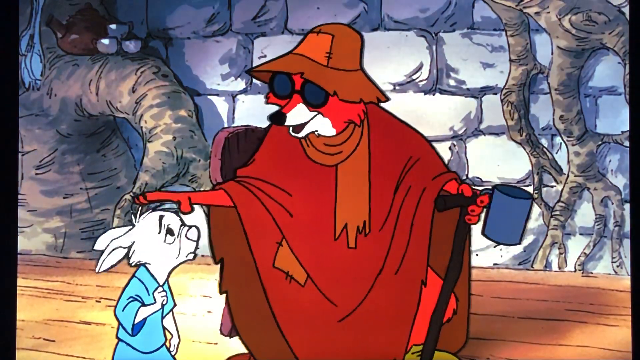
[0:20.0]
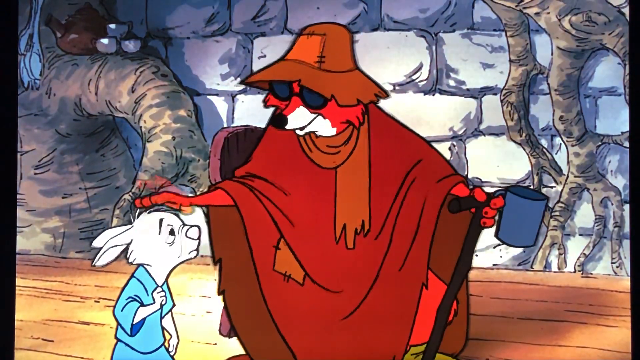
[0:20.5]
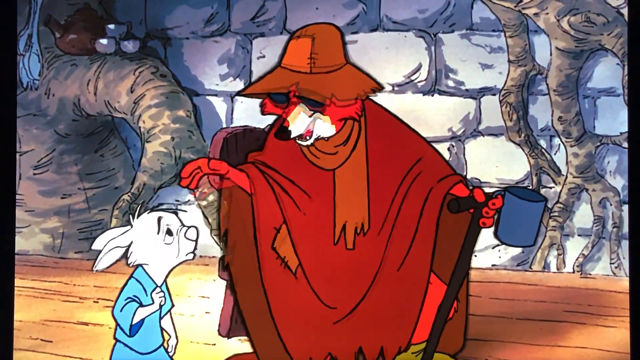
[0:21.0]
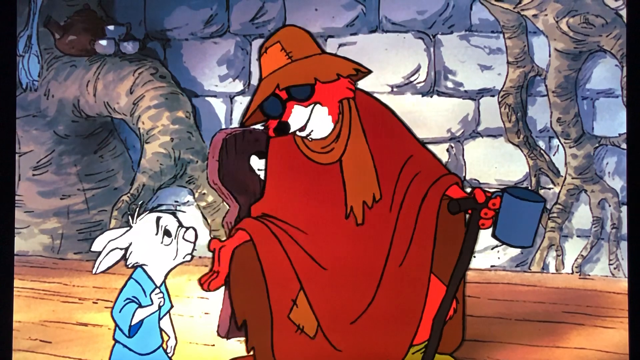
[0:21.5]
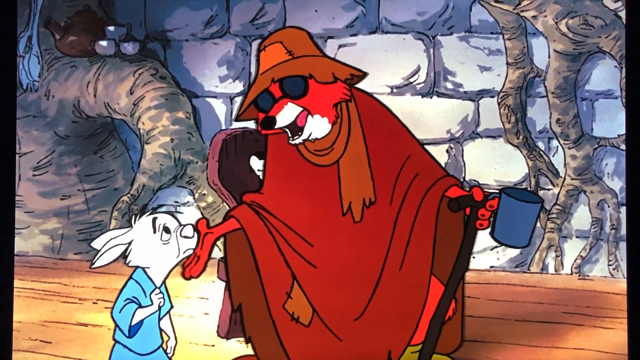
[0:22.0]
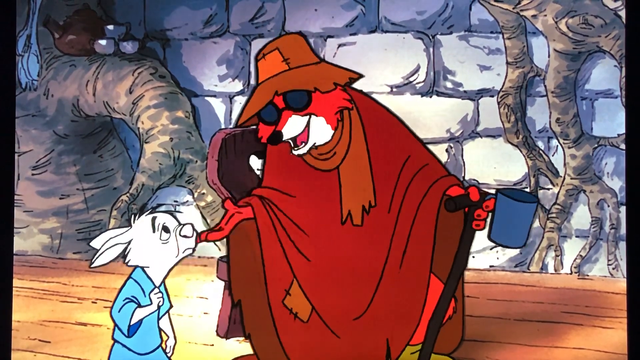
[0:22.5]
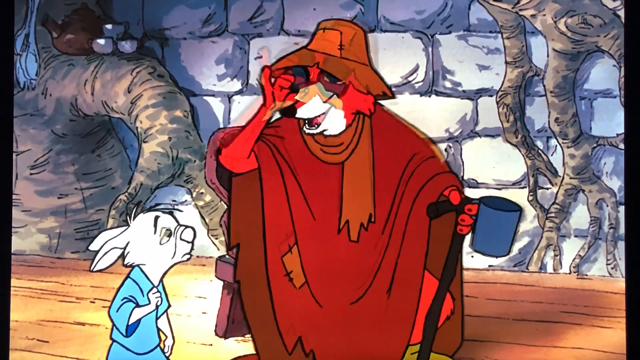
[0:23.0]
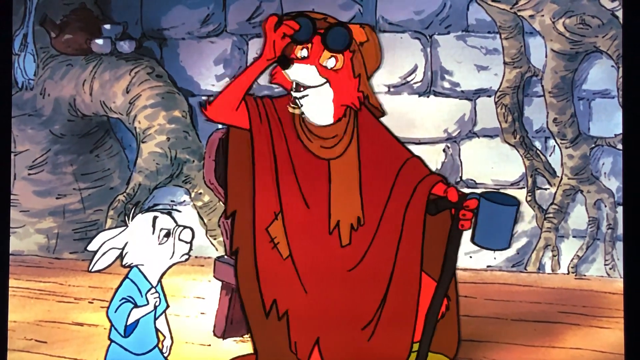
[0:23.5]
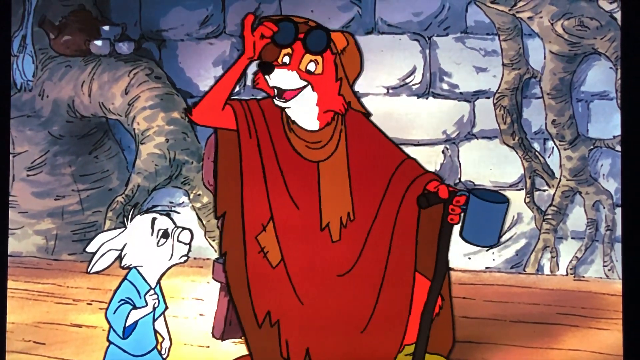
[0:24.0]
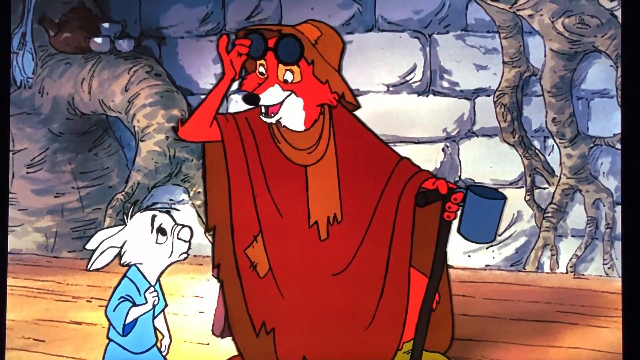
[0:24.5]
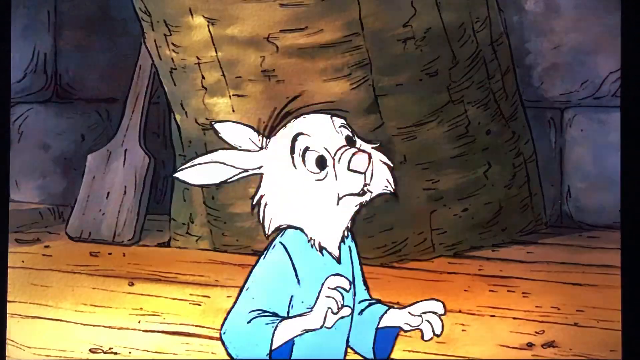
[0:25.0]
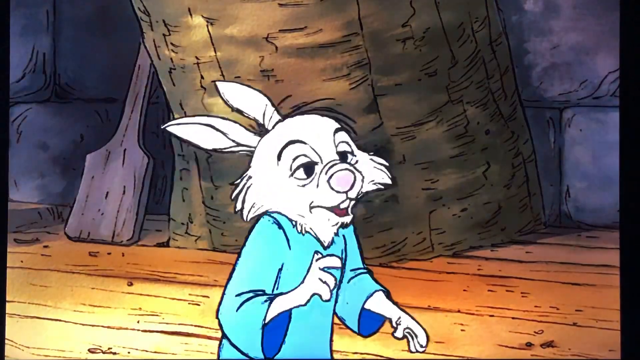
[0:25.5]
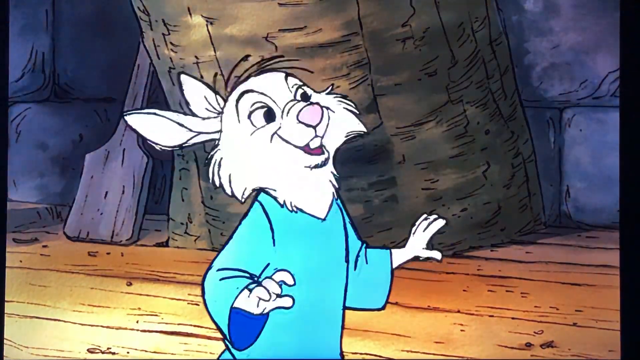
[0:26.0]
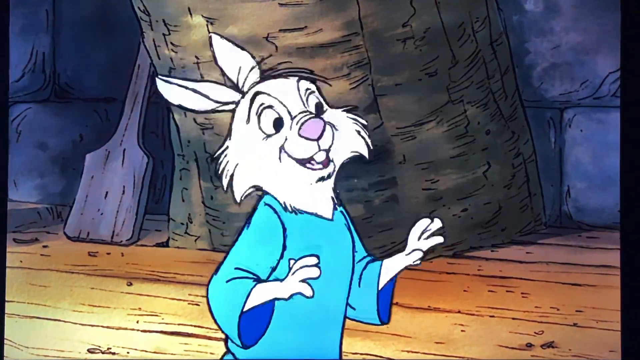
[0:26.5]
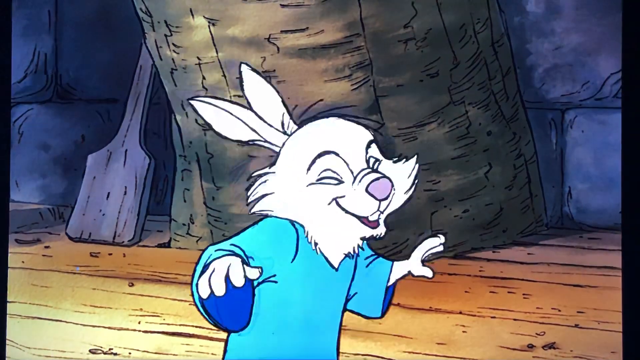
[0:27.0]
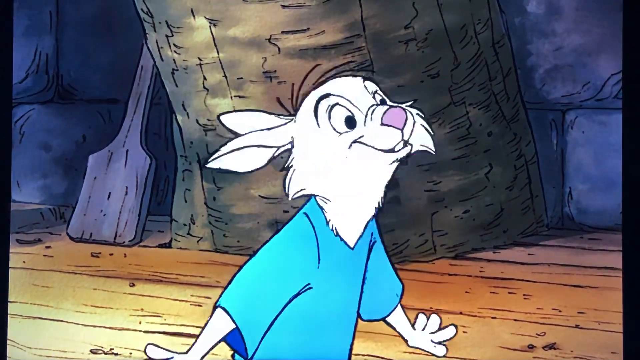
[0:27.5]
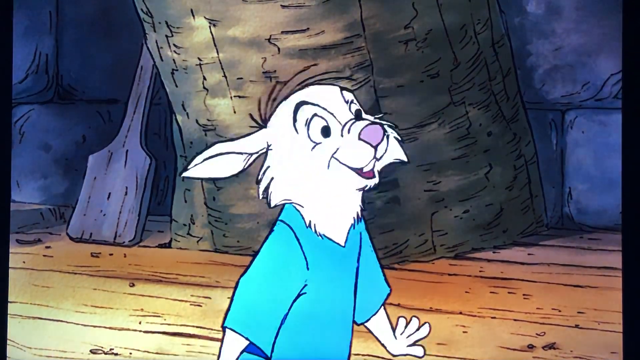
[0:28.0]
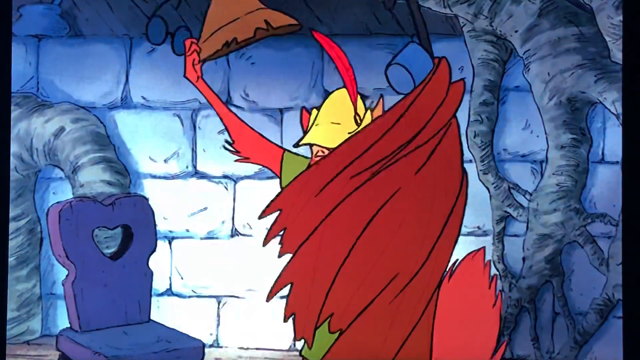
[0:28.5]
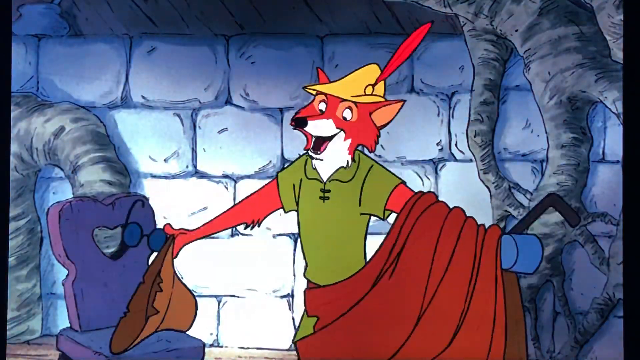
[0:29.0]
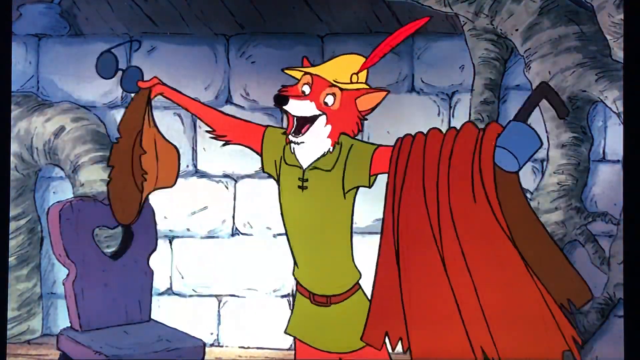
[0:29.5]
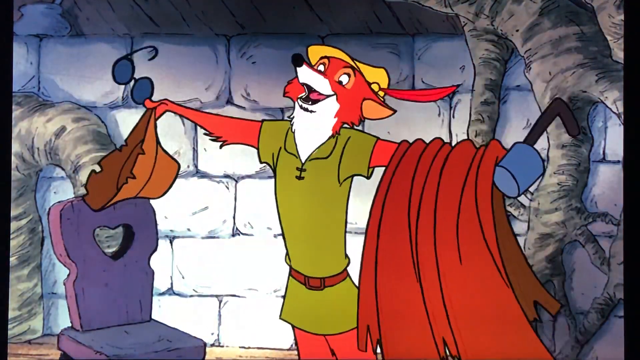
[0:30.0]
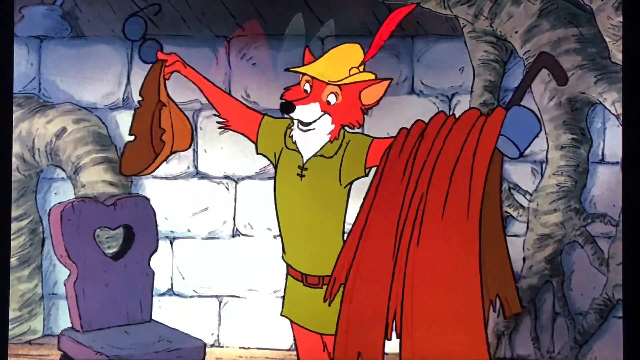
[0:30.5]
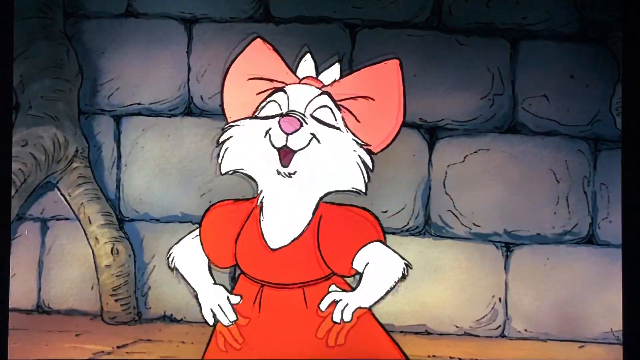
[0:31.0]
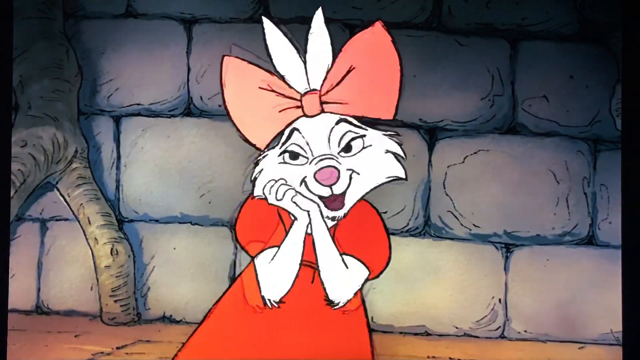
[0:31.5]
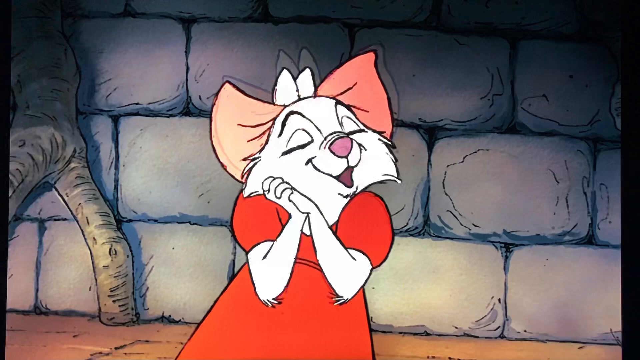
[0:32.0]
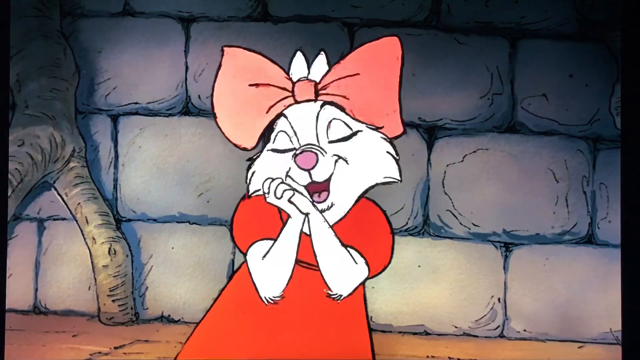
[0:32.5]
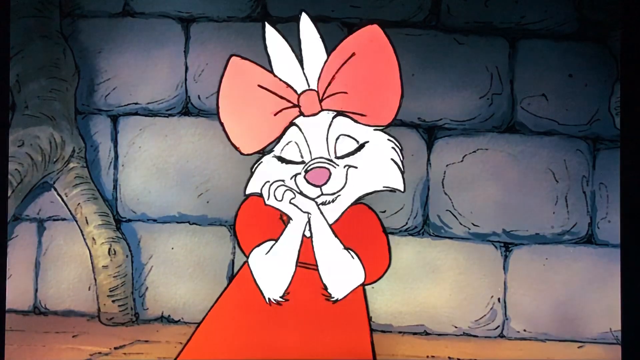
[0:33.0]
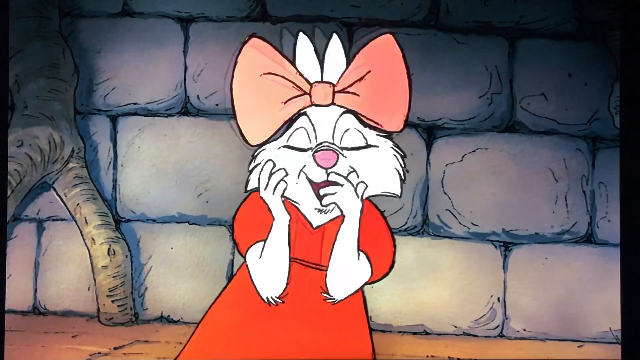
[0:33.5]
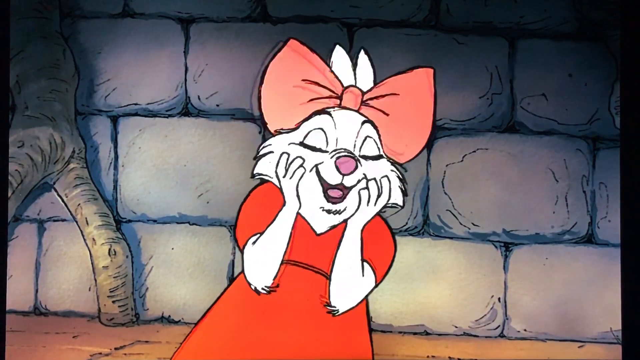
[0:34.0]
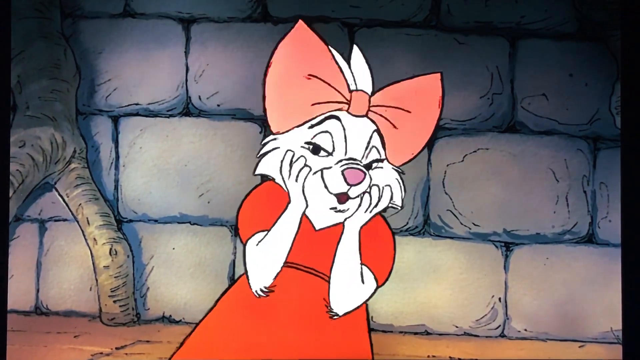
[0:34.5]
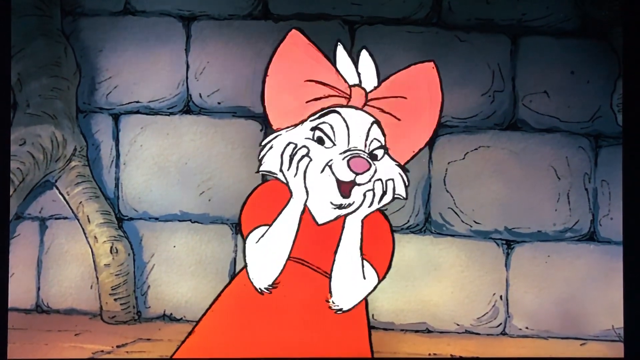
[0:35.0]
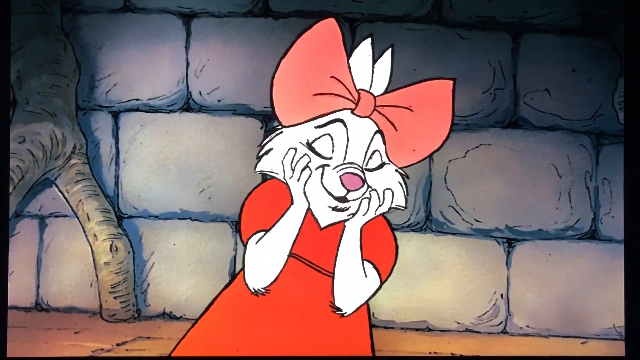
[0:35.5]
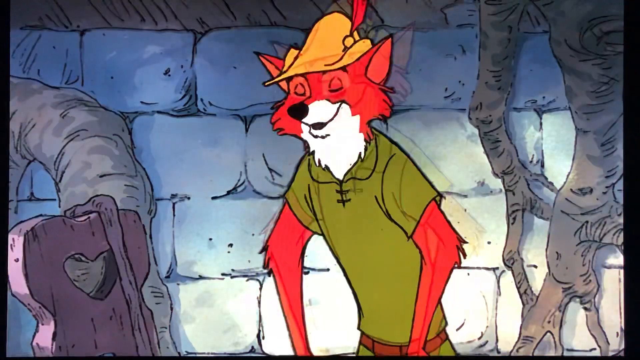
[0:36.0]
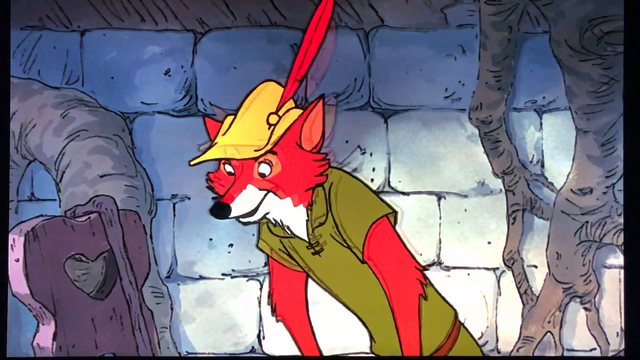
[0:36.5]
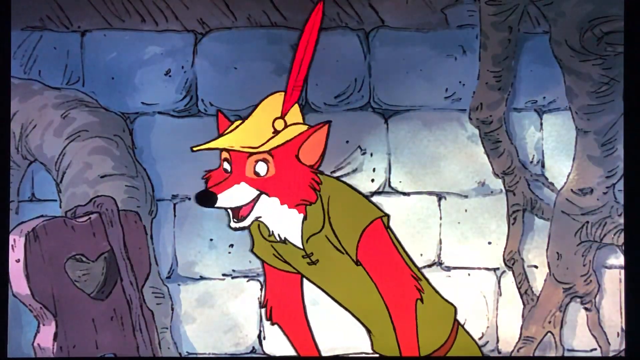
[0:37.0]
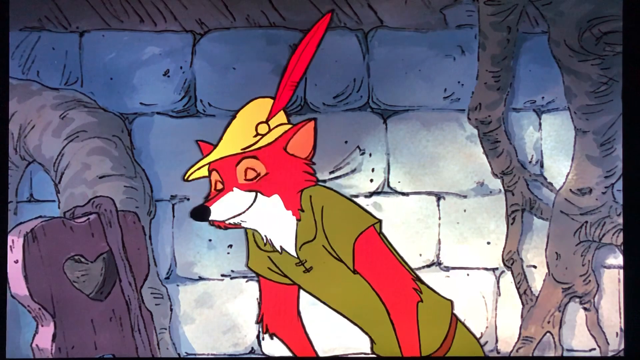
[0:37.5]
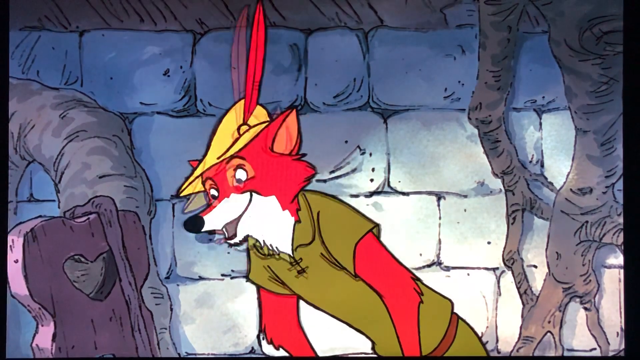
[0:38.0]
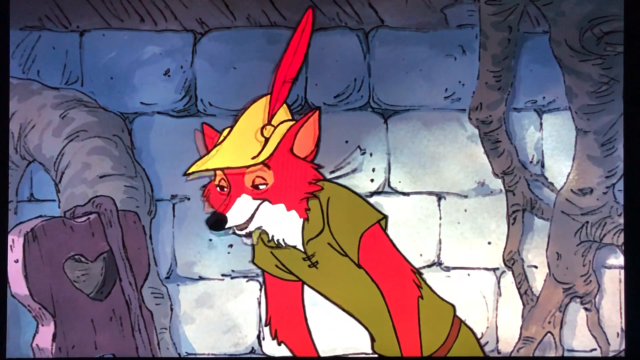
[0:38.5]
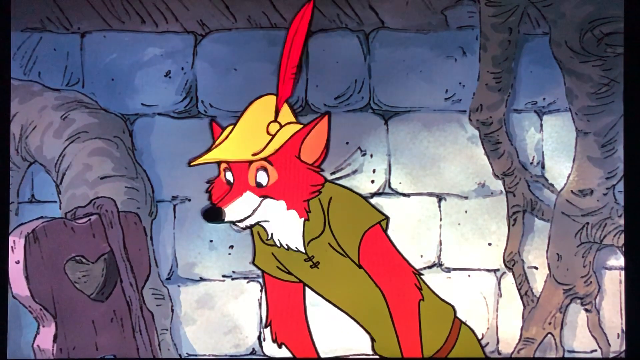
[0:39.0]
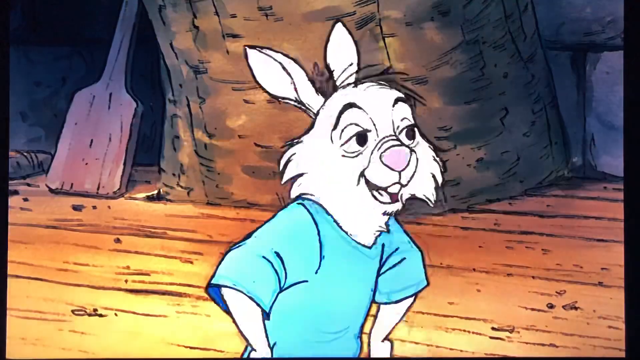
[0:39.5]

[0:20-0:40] The fox continues to comfort the upset rabbit, then lifts up his sunglasses to reveal his eyes. He takes off his hat and cloak, showing the rabbit that he is like Robin Hood. The fox now talks to the rabbit in a confident manner, unlike the old, poor fox from before. He wears a green shirt and a hat with a feather on top. All of the rabbits look uplifted, and the fox seems confident and happy.